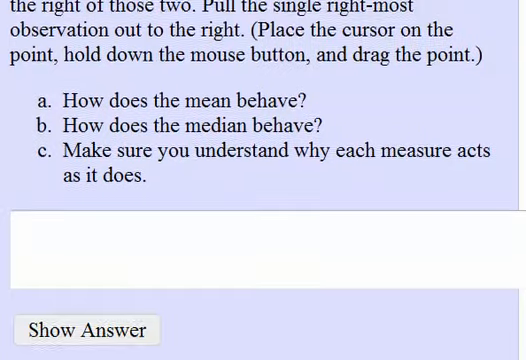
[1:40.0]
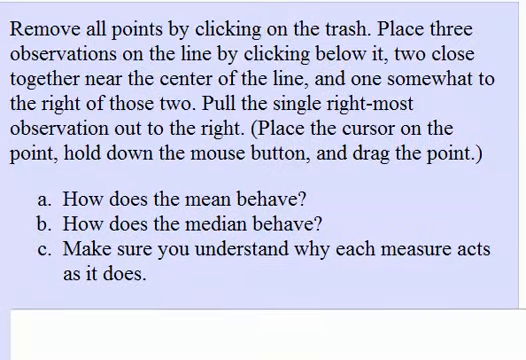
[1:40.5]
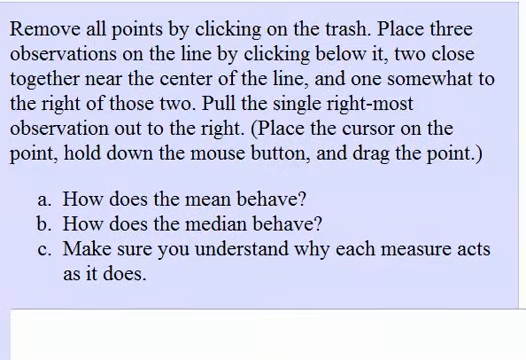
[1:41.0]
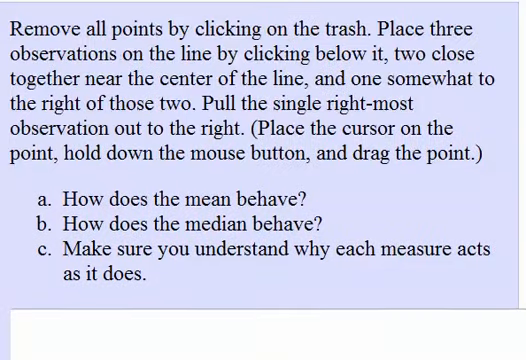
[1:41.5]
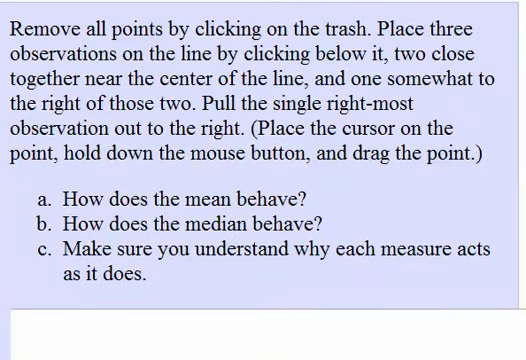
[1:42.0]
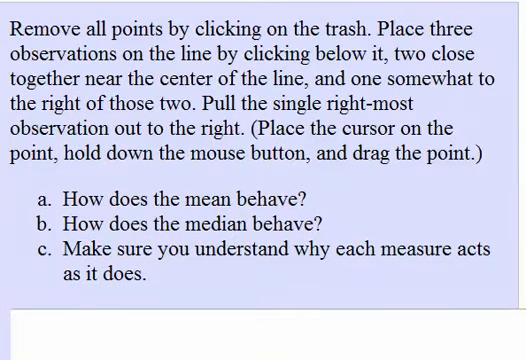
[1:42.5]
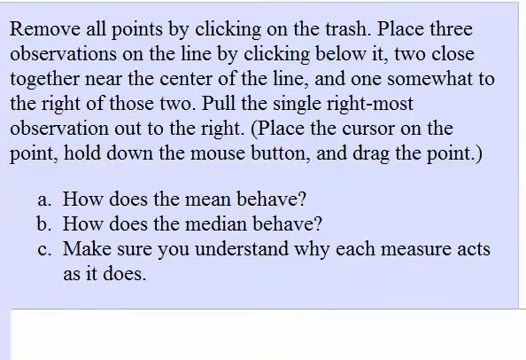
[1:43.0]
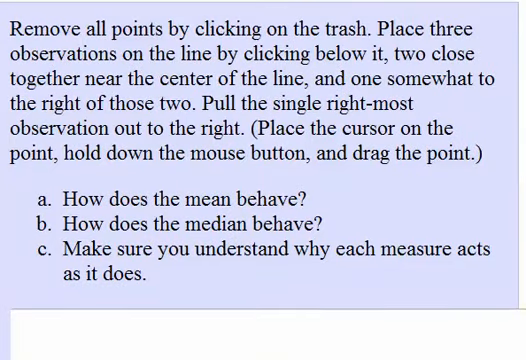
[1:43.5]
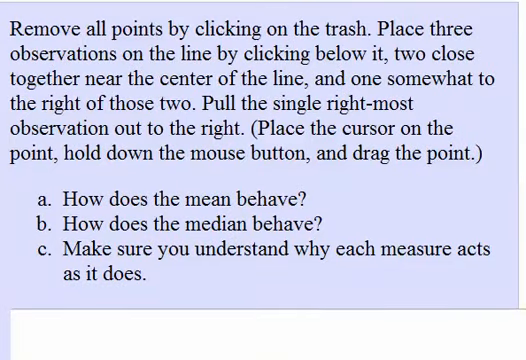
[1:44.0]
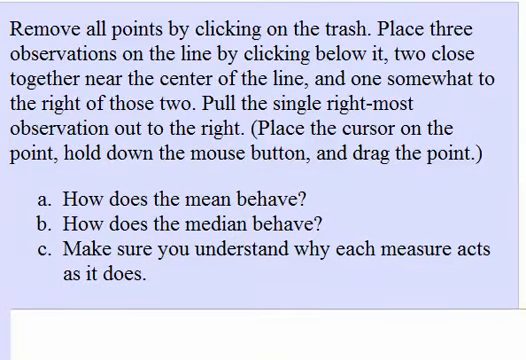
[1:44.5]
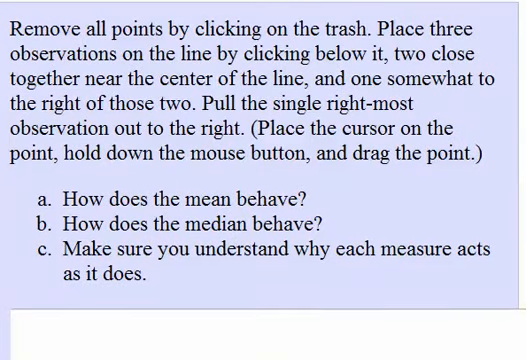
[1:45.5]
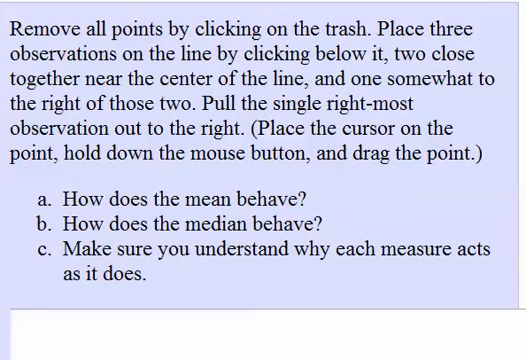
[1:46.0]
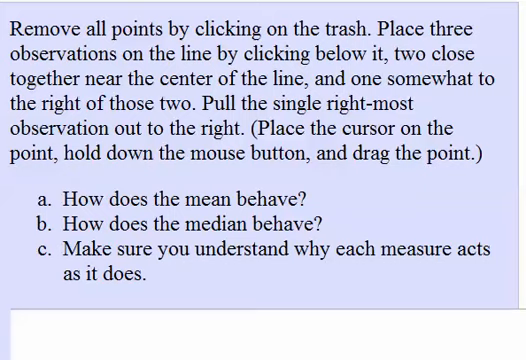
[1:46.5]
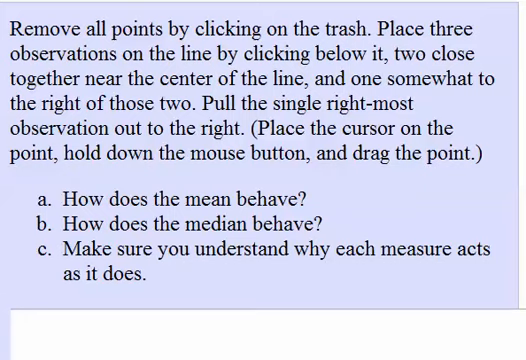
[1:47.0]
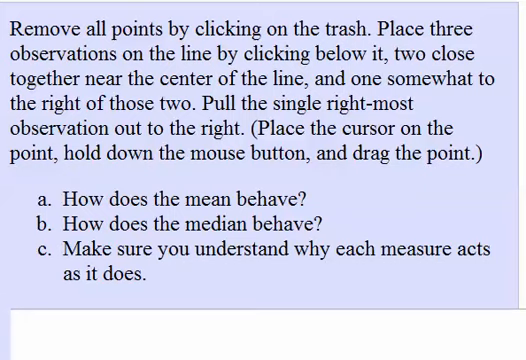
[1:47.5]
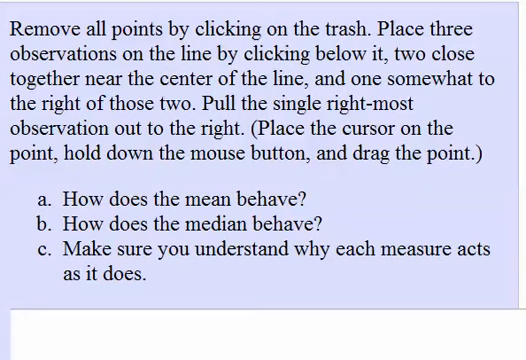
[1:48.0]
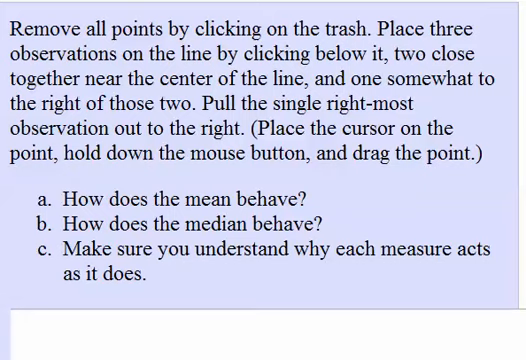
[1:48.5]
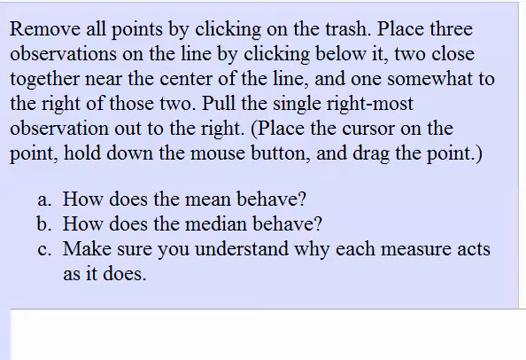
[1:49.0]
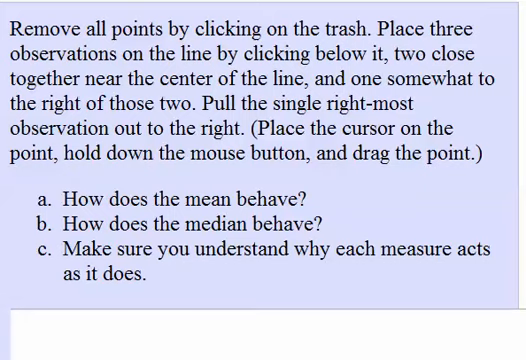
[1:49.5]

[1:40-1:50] The question and answer section for the Java applet is shown. One question reads "remove all points by clicking on the trash, place three observations on the line by clicking below it, two close together near the center of the line, and one somewhat to the right of those two. Pull the single rightmost observation out to the right, place the cursor on the point, hold down the mouse button and drag the point." It has parts A, B and C: A is "how does the mean behave?", B is "how does the median behave?", and C is "make sure you understand why each measure acts as it does." Below that is a text box for giving the answer.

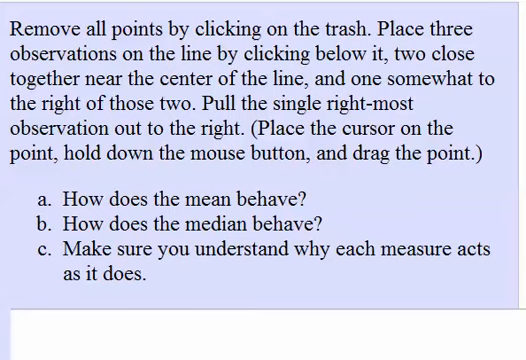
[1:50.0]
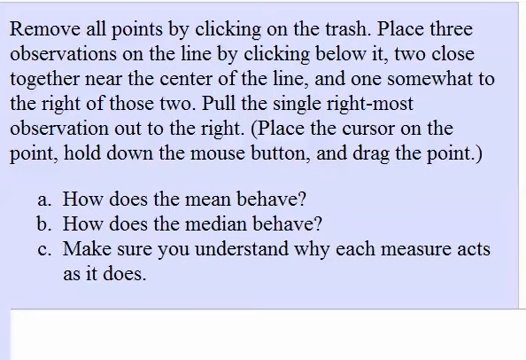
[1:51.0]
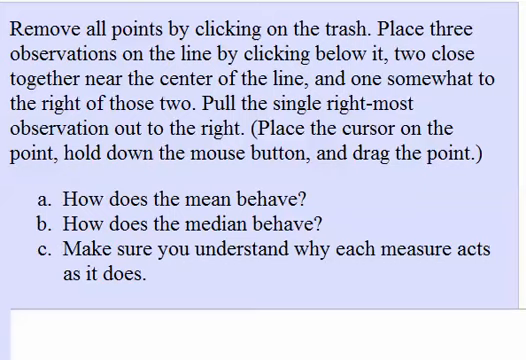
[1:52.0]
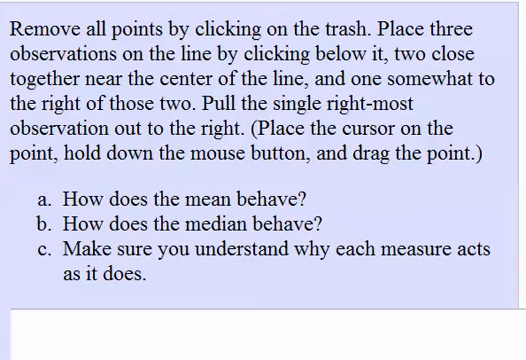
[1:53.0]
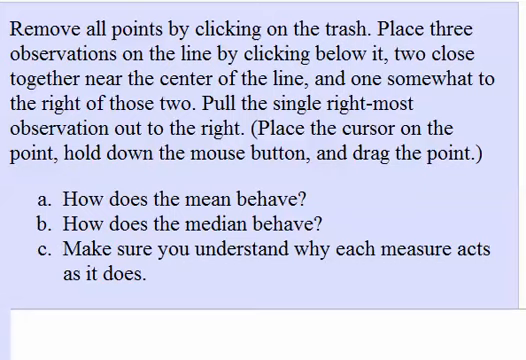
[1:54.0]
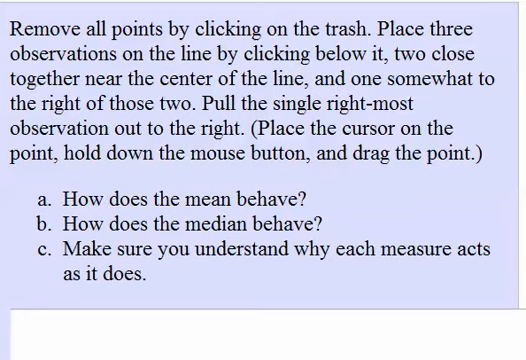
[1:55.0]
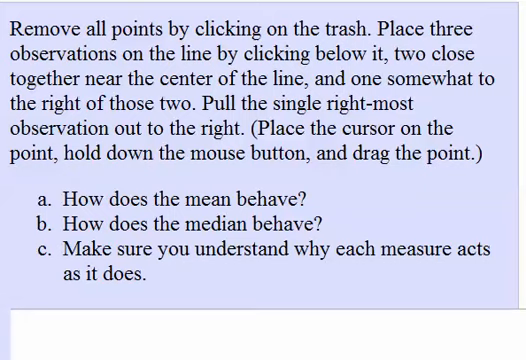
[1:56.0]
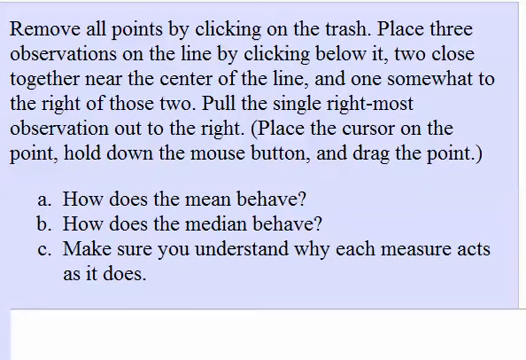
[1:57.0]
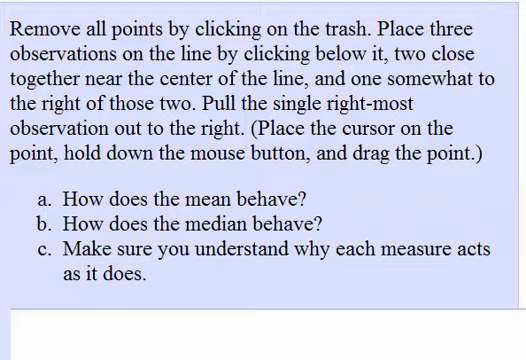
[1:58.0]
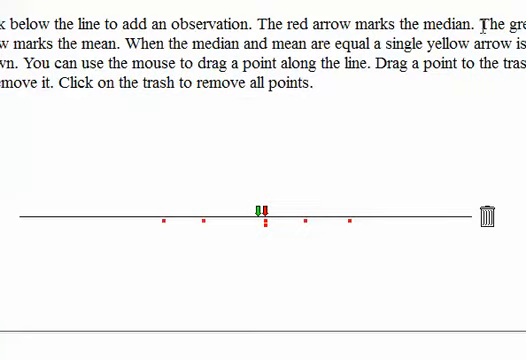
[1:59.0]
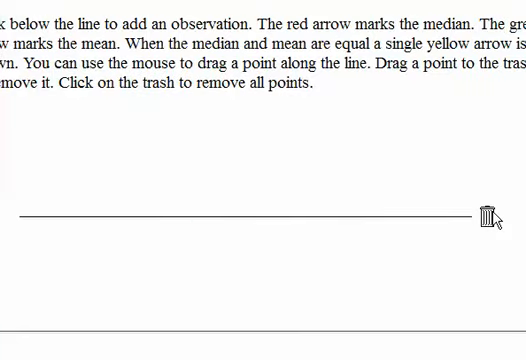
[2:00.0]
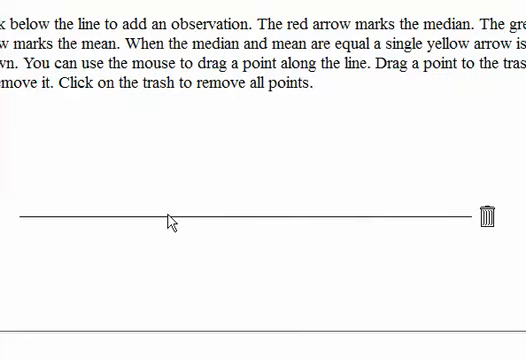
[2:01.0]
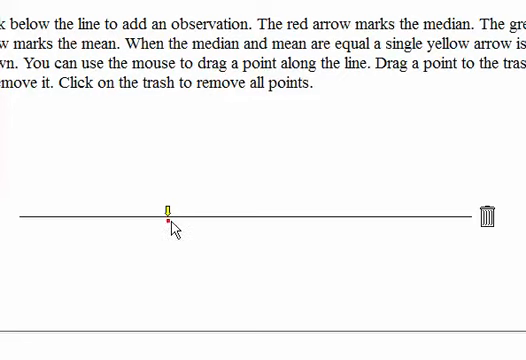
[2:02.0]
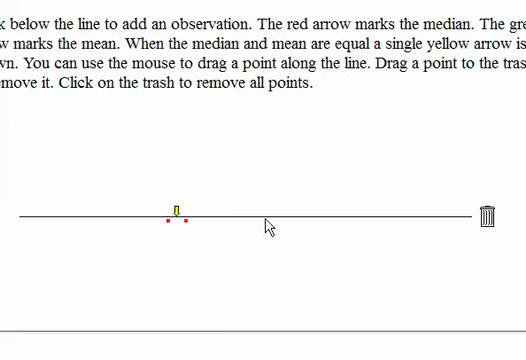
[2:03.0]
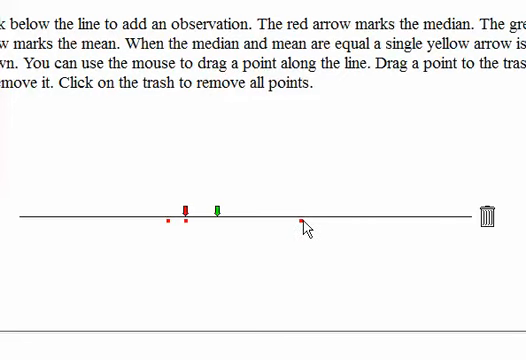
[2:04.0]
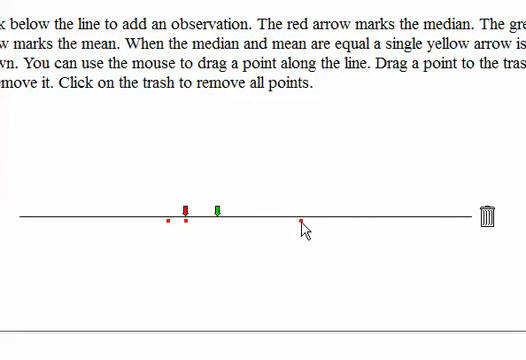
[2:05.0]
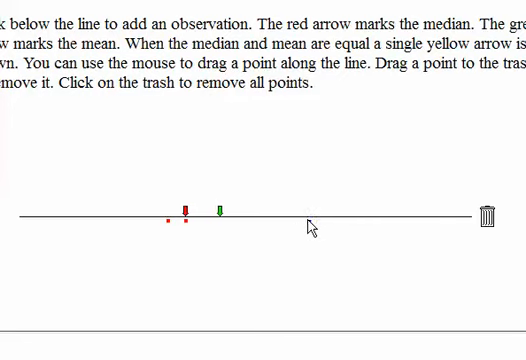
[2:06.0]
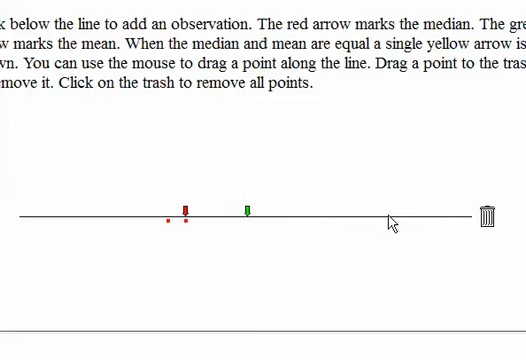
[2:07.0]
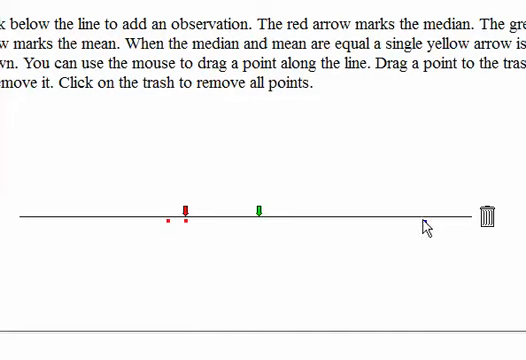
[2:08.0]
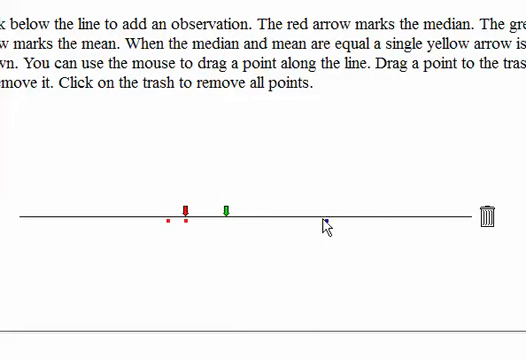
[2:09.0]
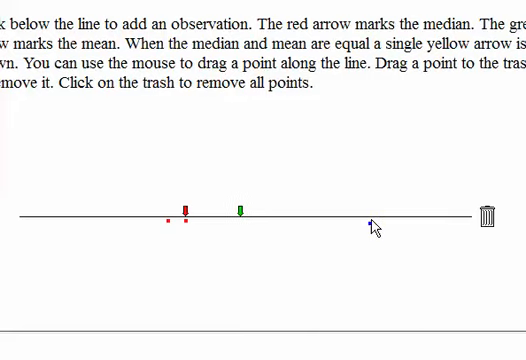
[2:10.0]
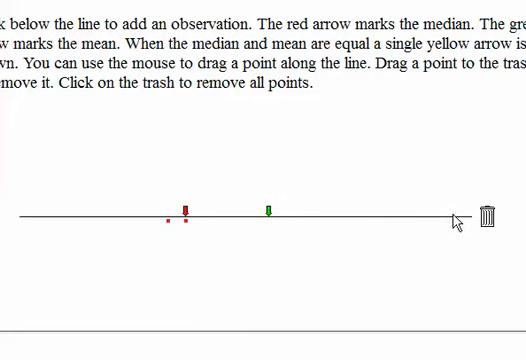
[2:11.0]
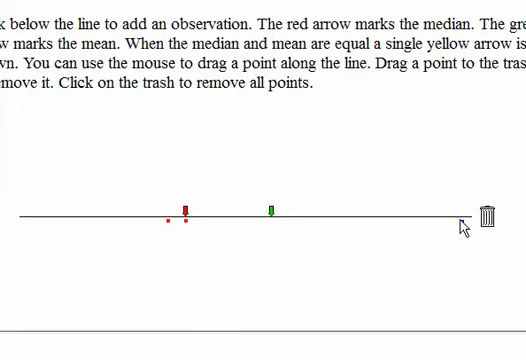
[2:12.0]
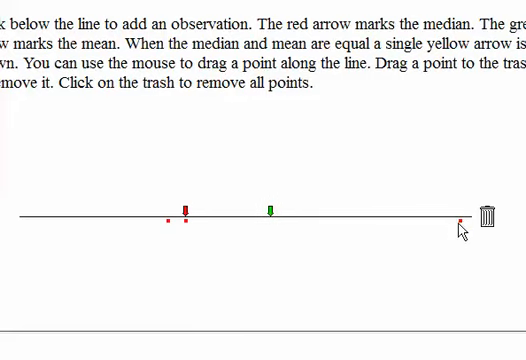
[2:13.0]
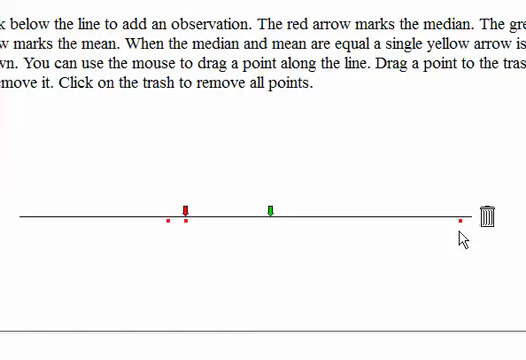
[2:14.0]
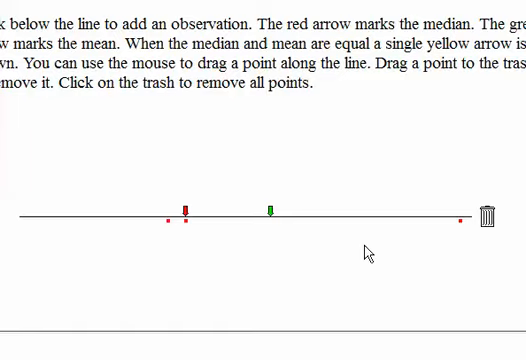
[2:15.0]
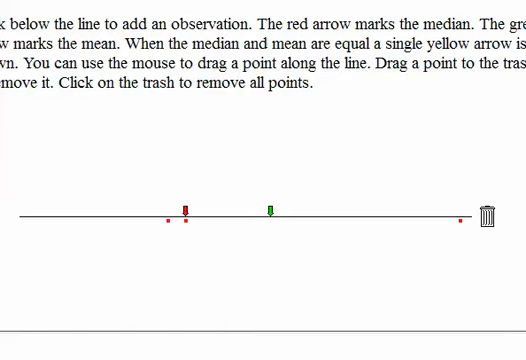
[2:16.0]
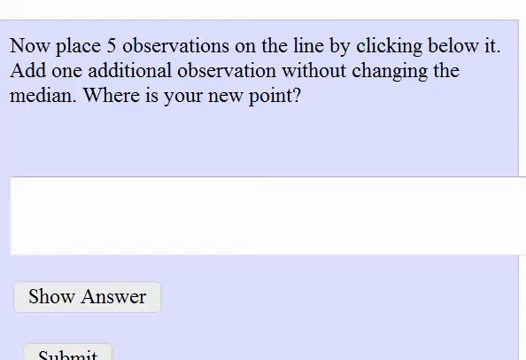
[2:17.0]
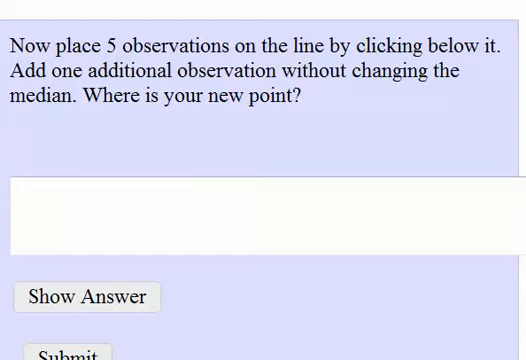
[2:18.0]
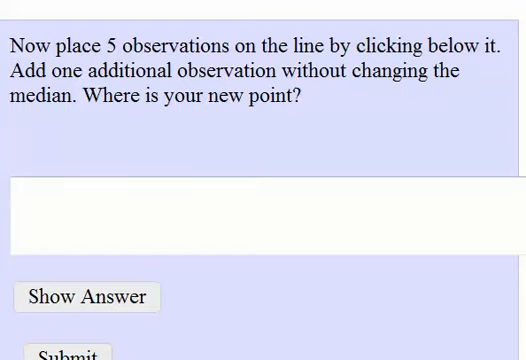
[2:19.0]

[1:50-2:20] The questions, answers and definitions are shown. The question reads "remove all points by clicking on the trash. Place three observations on the line by clicking below it. Two close together near the center of the line and one somewhat to the right of the two. Pull the single rightmost observation out to the right. Place the cursor on the point. Hold down the mouse button and drag the point." Parts A, B and C follow: "how does the mean behave?", "how does the median behave?" and "make sure you understand why each measure acts as it does." The video then goes back to the line where dots are placed underneath it. The user puts the mouse pointer on top of the trash can and clicks, deleting all of the points that were added and all of the marks above them.